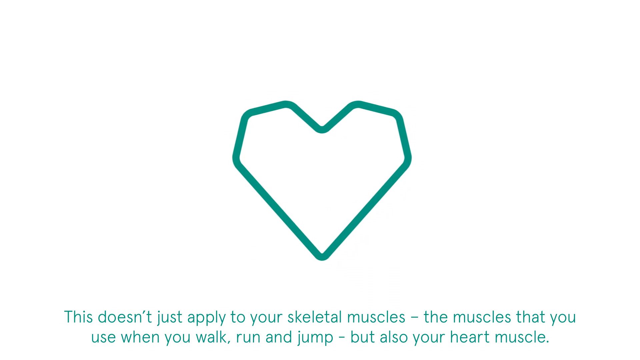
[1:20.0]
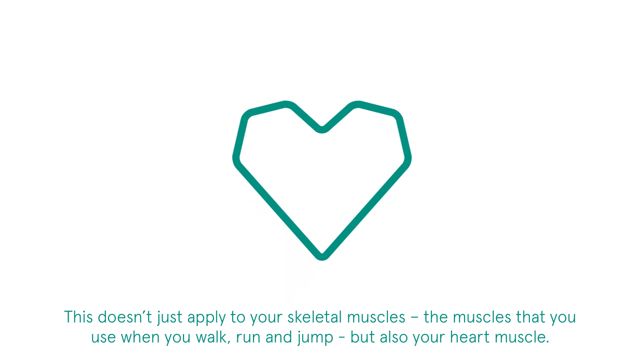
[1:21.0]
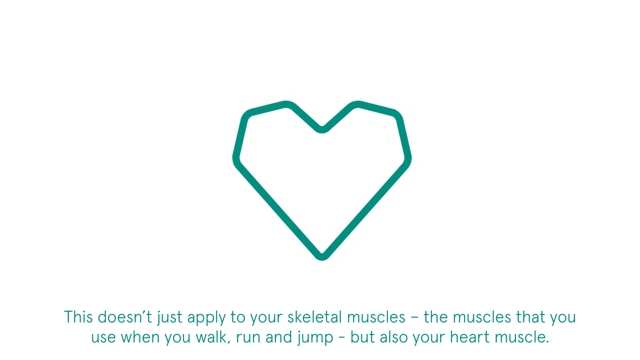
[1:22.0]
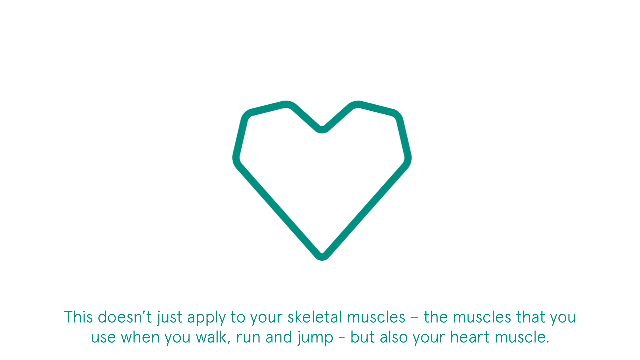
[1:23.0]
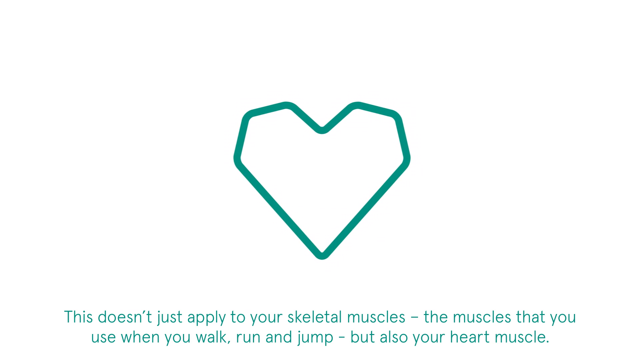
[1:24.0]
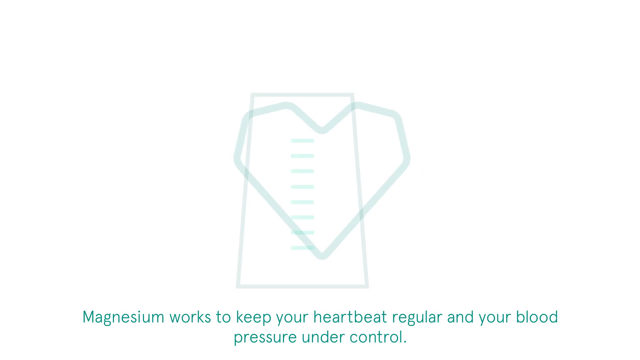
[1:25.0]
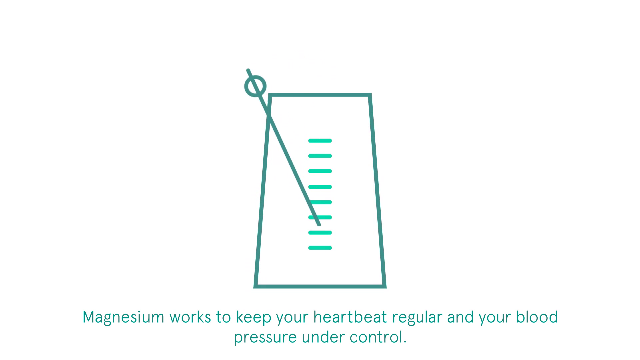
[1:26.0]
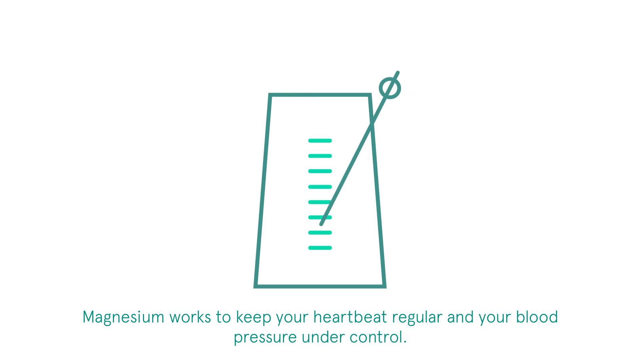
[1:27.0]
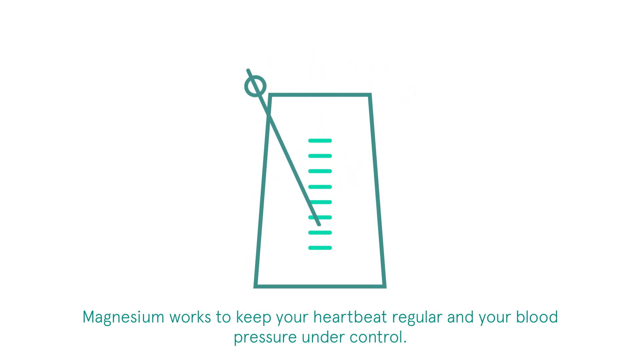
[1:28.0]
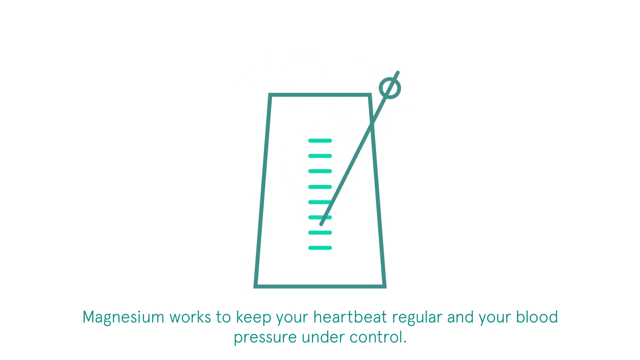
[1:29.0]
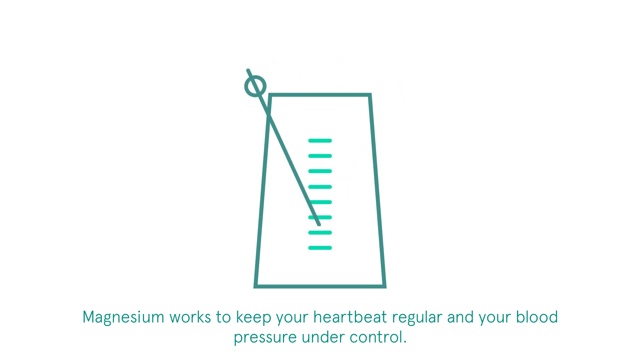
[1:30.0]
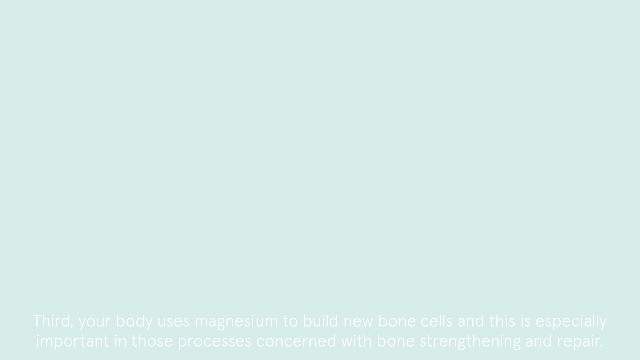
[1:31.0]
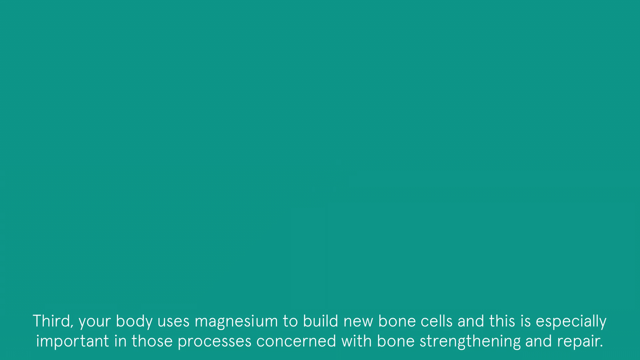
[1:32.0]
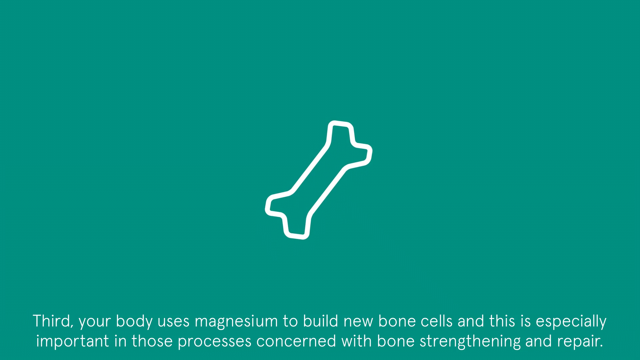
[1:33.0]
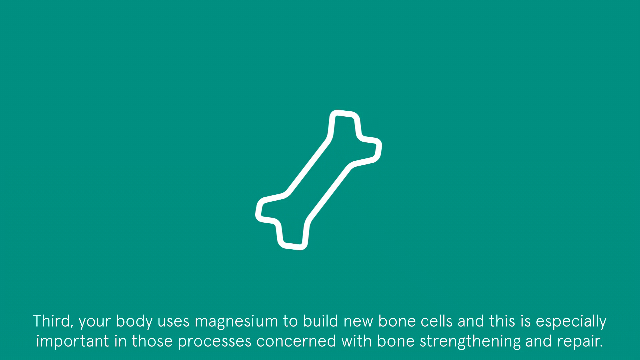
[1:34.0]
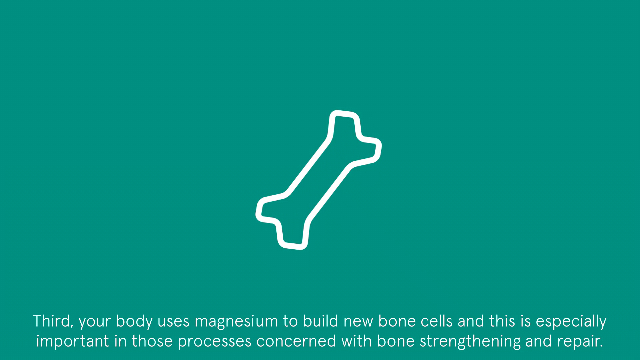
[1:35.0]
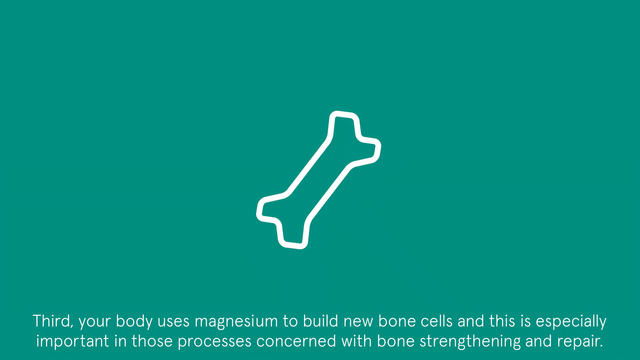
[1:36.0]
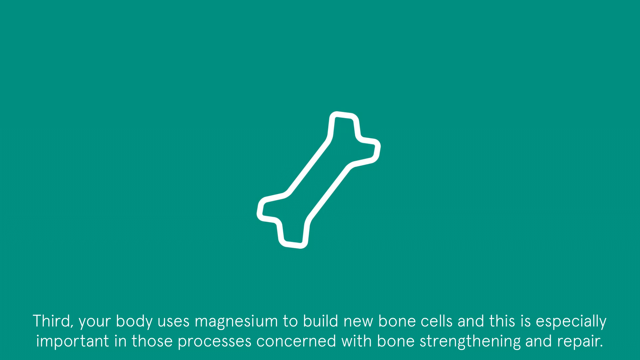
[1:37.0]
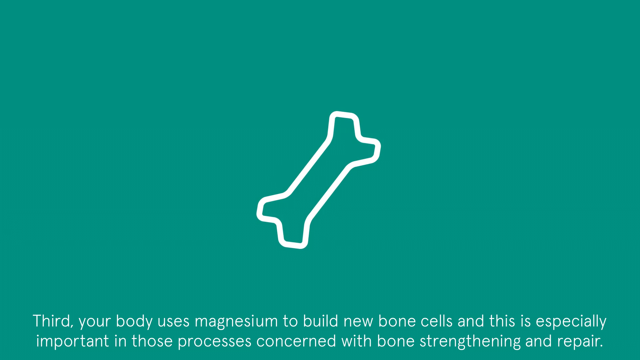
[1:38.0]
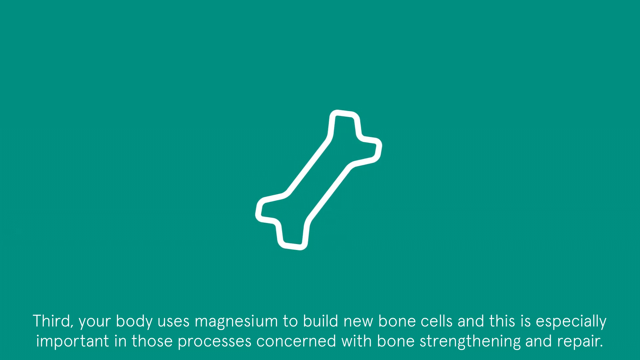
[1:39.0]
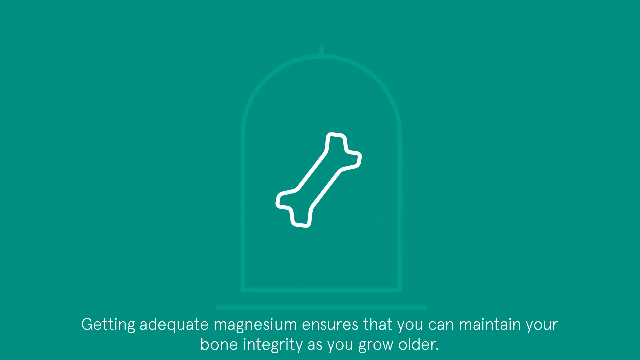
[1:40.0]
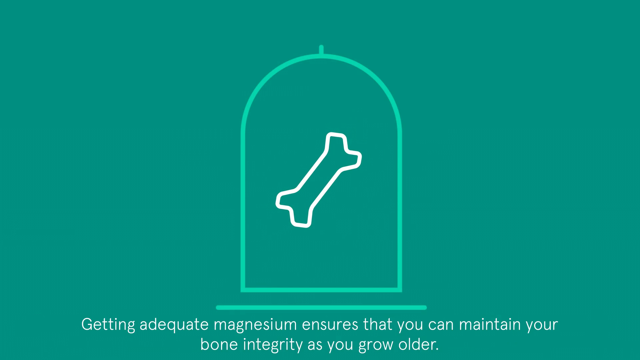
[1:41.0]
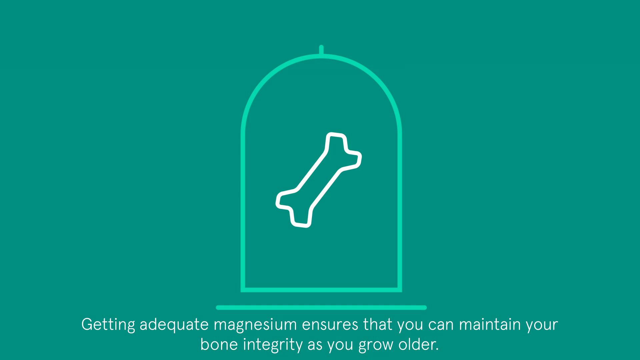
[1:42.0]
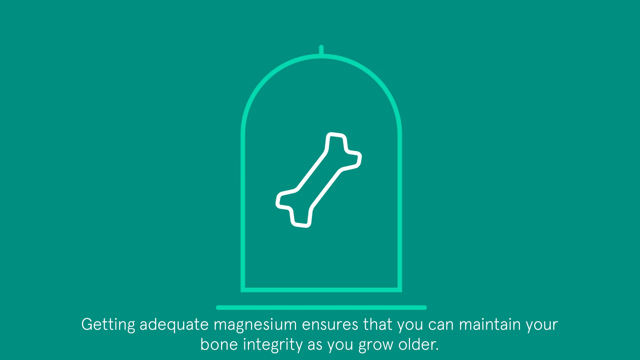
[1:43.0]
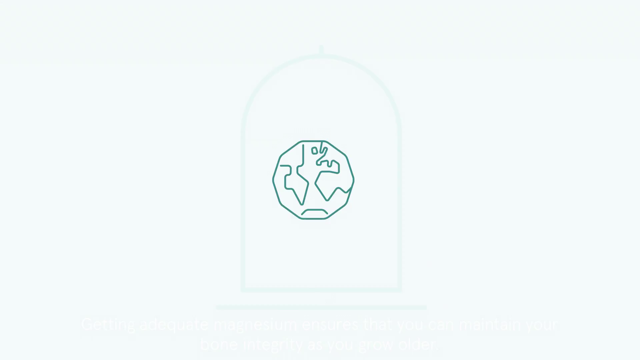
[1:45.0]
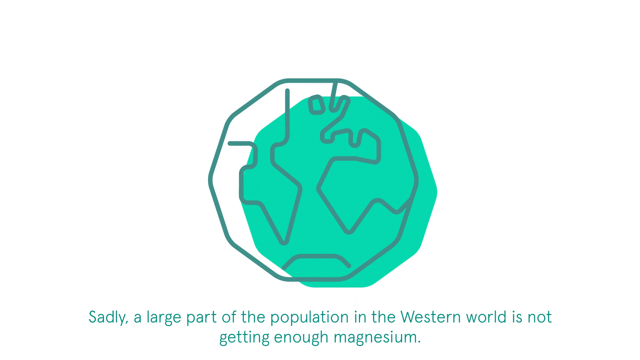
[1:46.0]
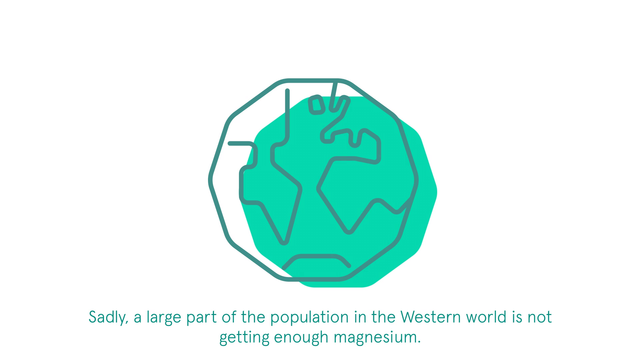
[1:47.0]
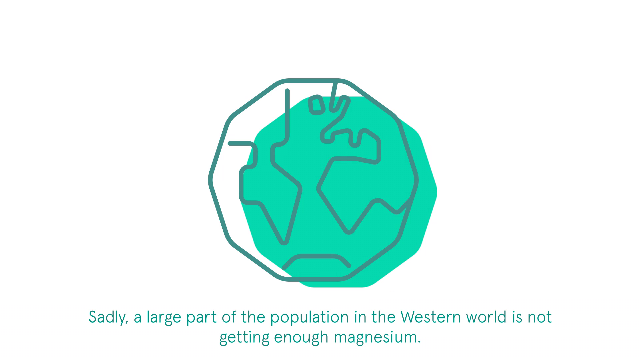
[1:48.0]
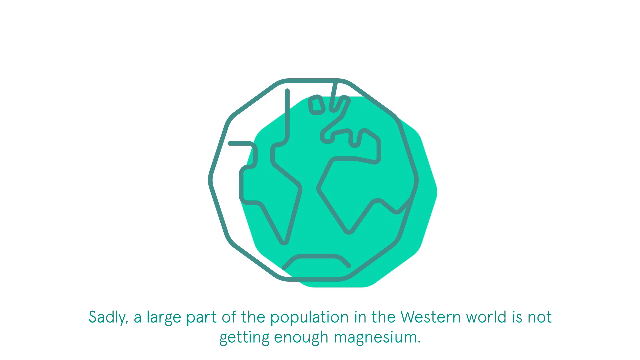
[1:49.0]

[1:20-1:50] The video continues as a series of slides. This one shows a teal outline of a heart, the love-symbol kind rather than an anatomical heart. It is jagged rather than smooth, with eight sides, essentially an octagon shaped into a heart. The text reads "this doesn't just apply to your skeleton muscles, the muscles that you use when you walk, run and jump, but also your heart muscle." A new slide shows the outline of a metronome with several levels but no numbers, and the text "magnesium works to keep your heartbeat regular and your blood pressure under control." Next comes a slide with a bone: "Third, your body uses magnesium to build new bone cells. And this is especially important in those processes concerned with bone strengthening and repair. Getting adequate magnesium ensures that you can maintain your bone integrity as you grow older."